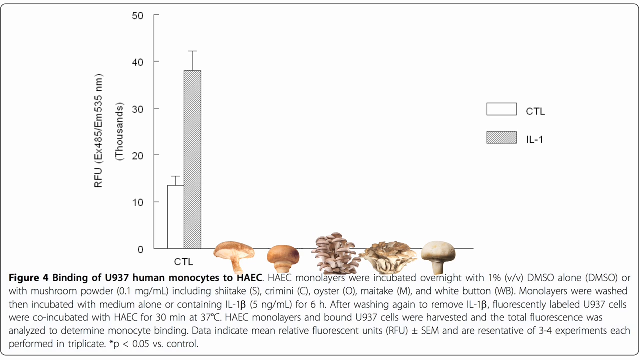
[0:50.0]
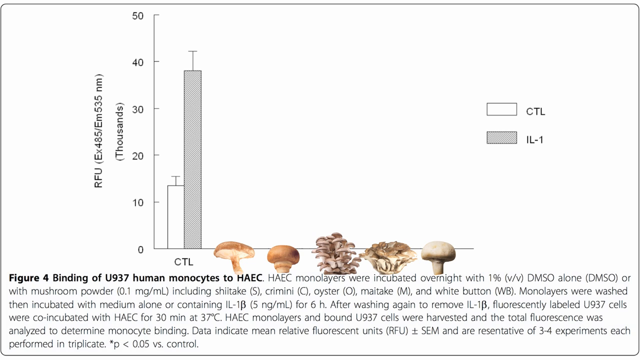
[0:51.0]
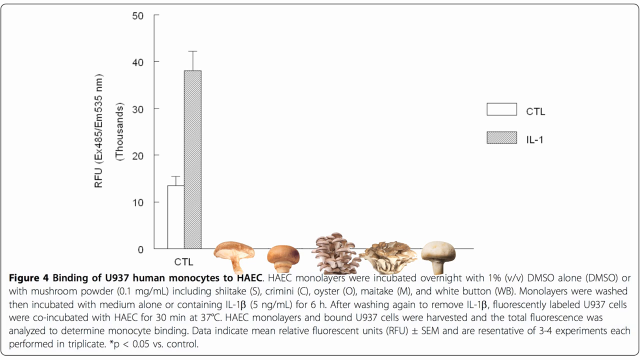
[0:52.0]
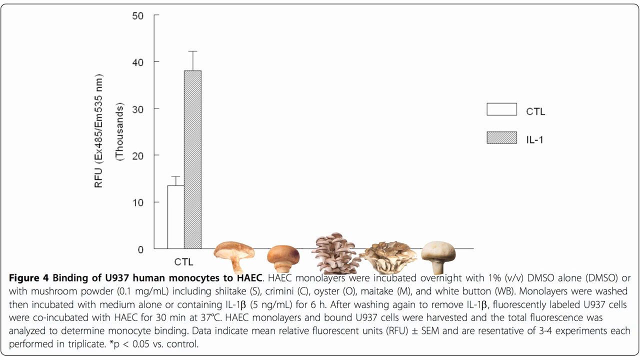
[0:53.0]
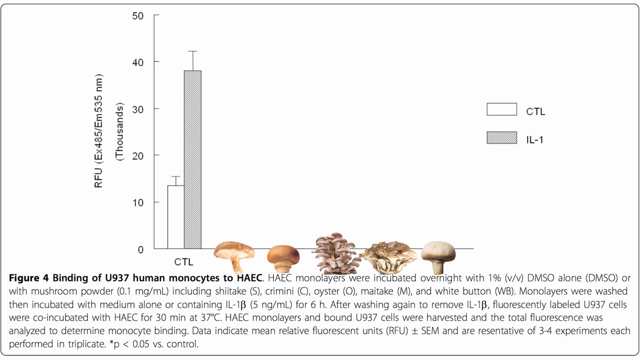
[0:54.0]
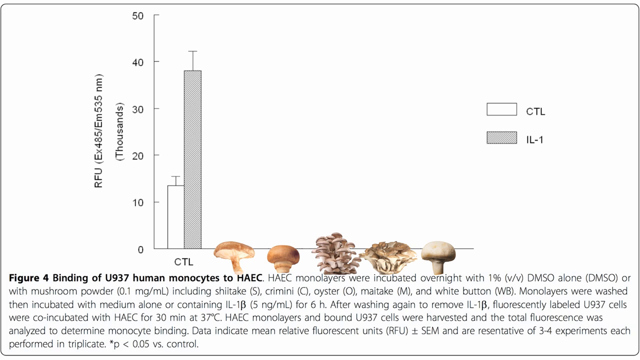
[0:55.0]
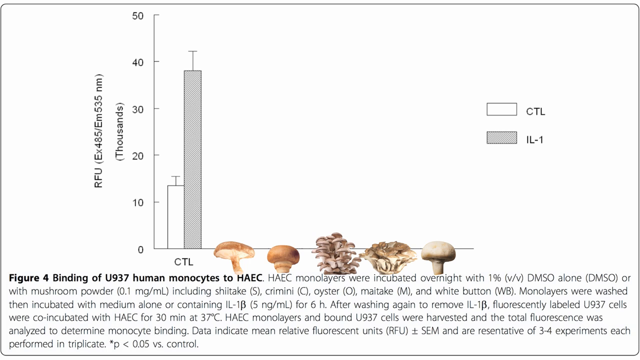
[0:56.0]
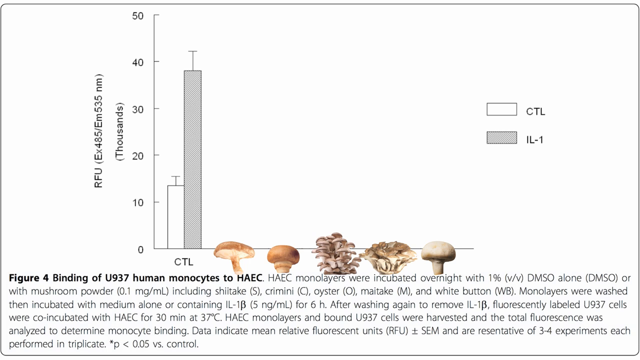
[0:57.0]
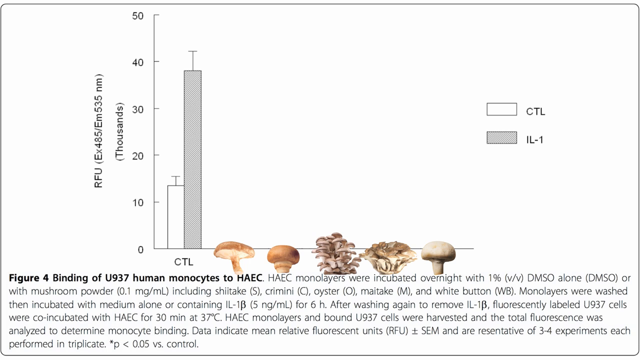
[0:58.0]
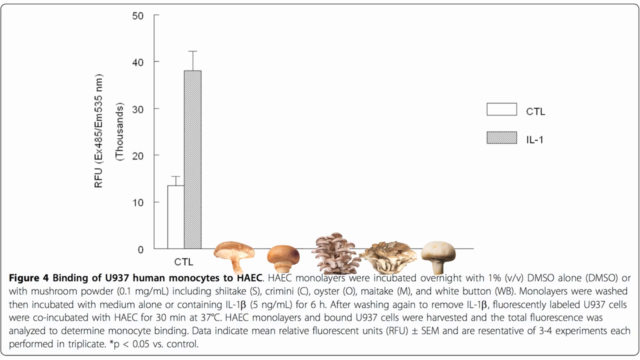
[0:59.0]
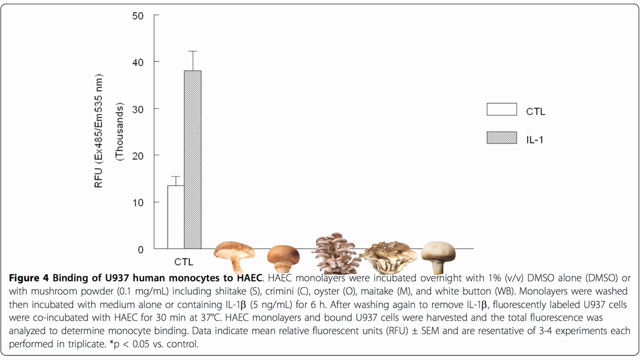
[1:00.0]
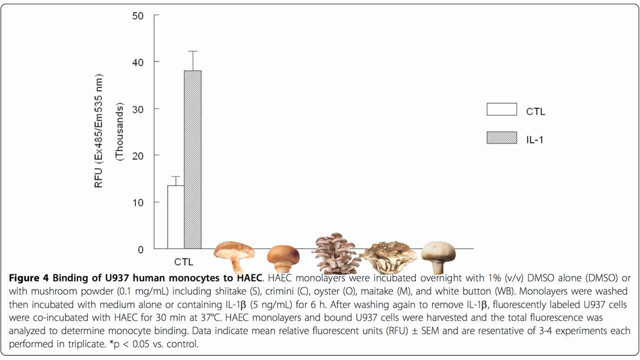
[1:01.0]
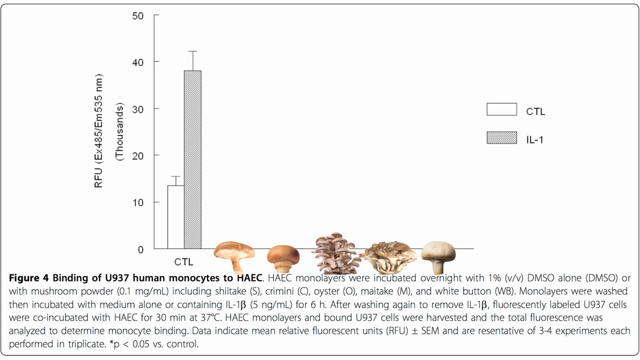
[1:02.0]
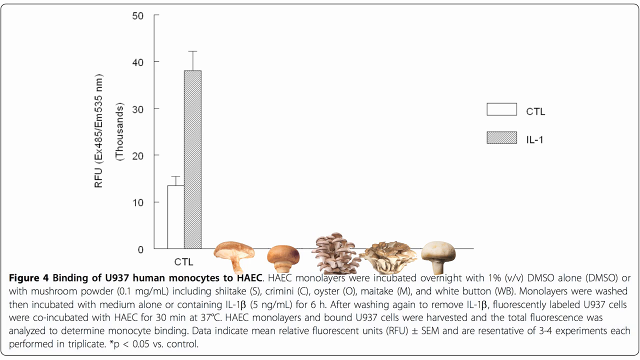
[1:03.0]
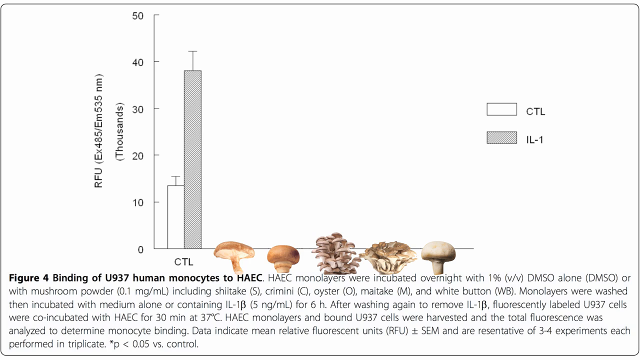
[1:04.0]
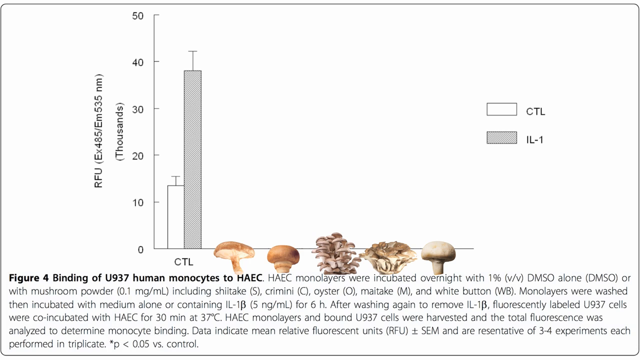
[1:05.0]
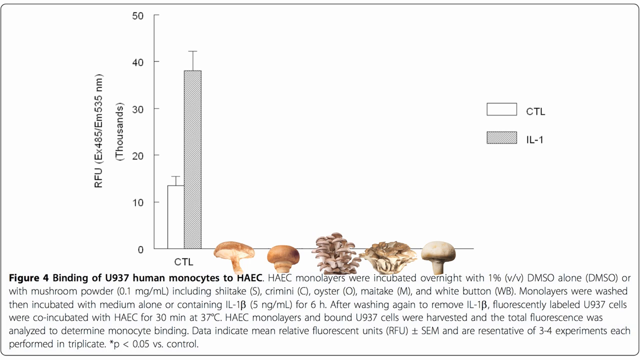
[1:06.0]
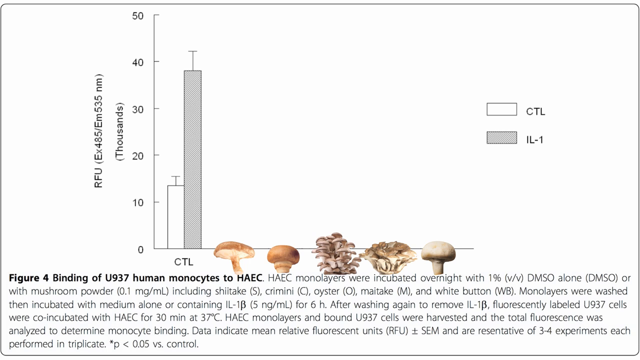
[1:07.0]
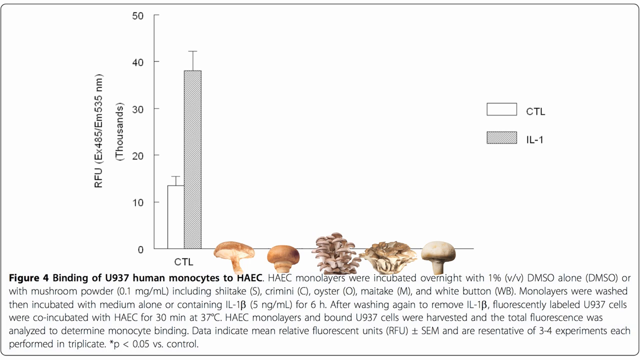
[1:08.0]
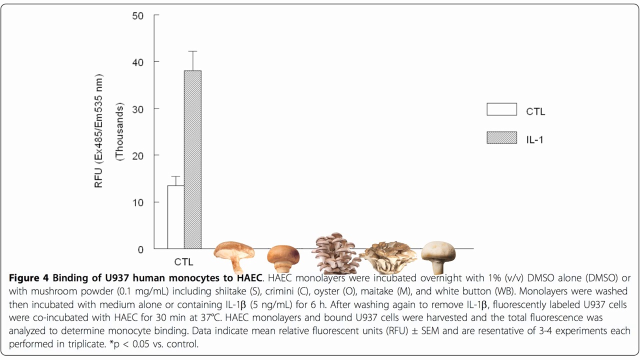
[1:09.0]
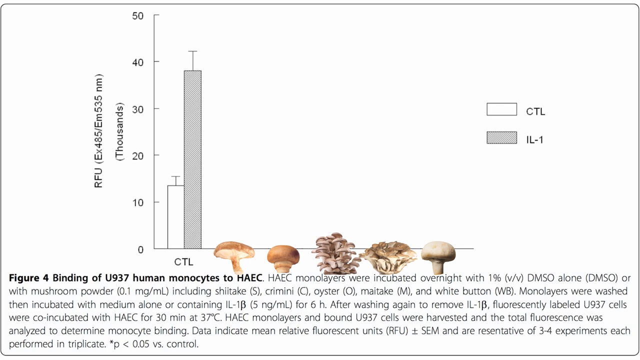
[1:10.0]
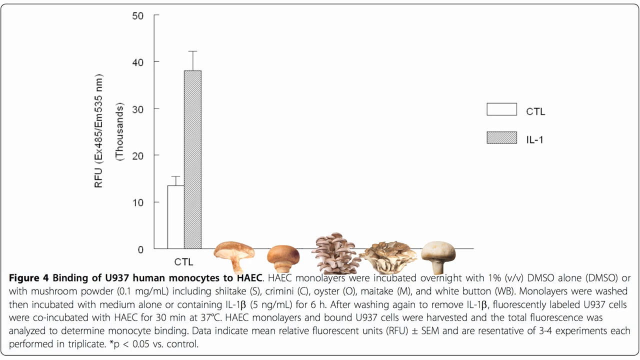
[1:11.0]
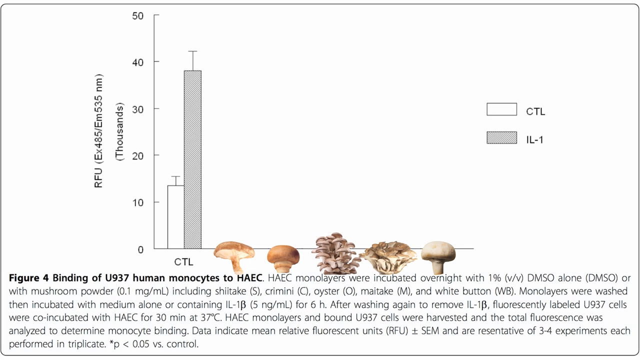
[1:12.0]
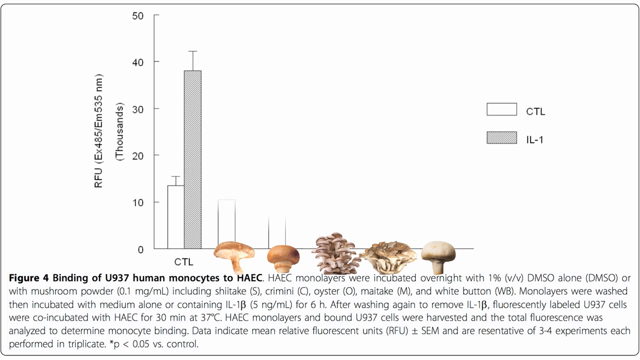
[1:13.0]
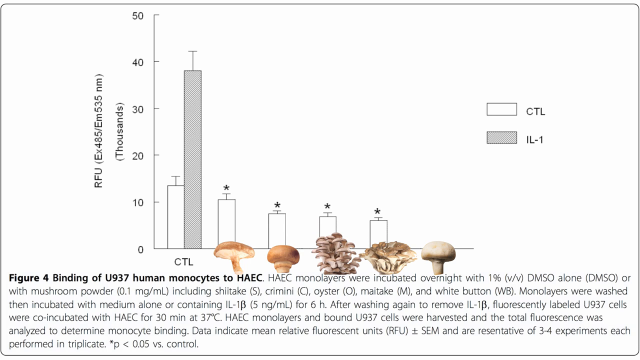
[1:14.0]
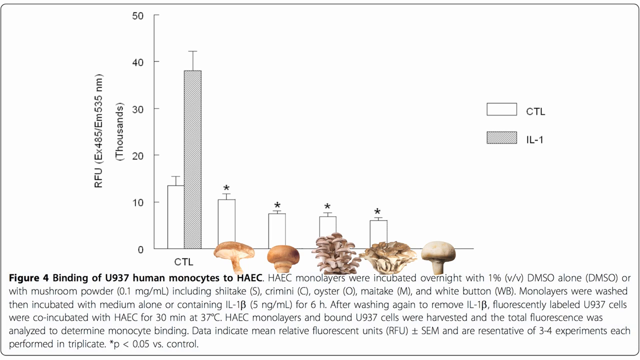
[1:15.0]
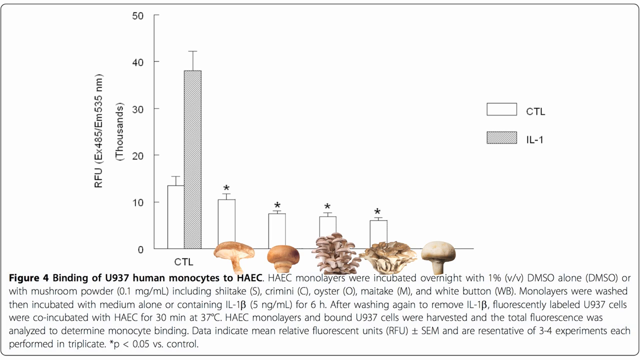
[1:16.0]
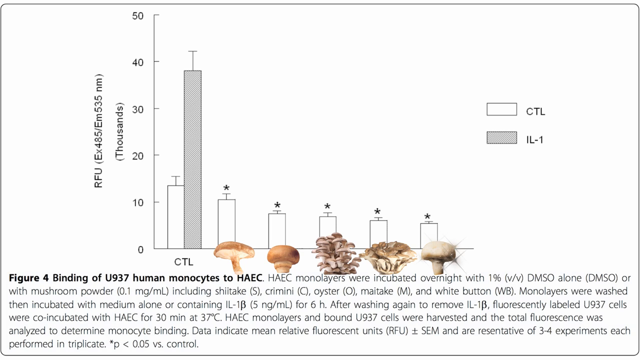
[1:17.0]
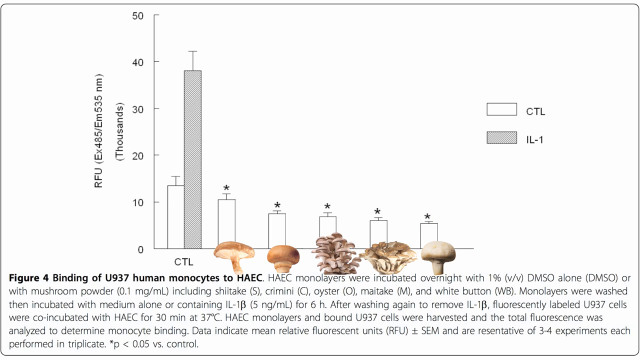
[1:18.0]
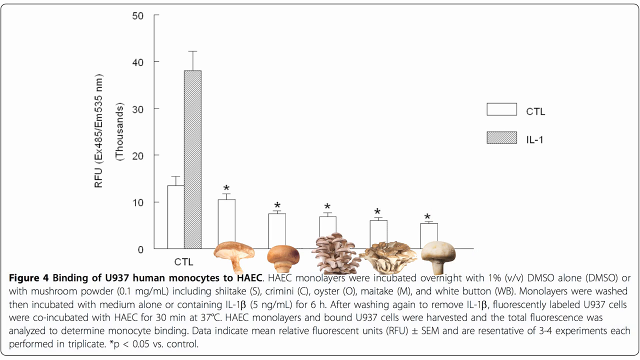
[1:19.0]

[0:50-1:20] Near the bottom of the page are what appear to be illustrations or drawings of mushrooms, most of them light brown and white in color. There is some kind of bar chart, with the letters "RFU, EX45/EM535 NM" and "thousands" written vertically alongside the numbers 0, 10, 20, 30, 40 and 50. At the right of the page, opposite the chart, is a white rectangular box with the letters "CTL" and black text next to it, and right below it is a grayed-out box of the same rectangular shape with black text that says "IL-1". At the very bottom, black text reads "figure 4 binding of U-937 human monocytes to HAEC", followed by "HAEC monolayers were incubated overnight with 1% B/B, DMSO alone, DMSO or with mushroom powder, 0.1 milligram per milliliter, including shiitake, crimini, oyster, maitake, and white button".